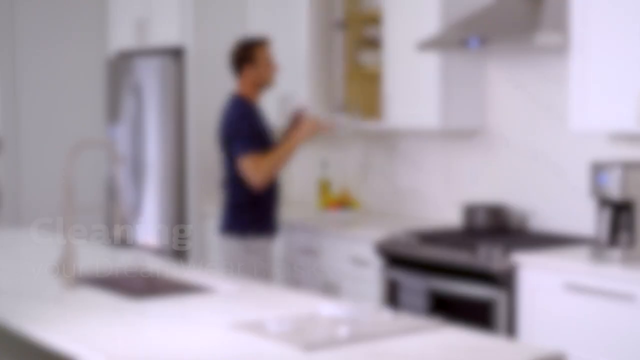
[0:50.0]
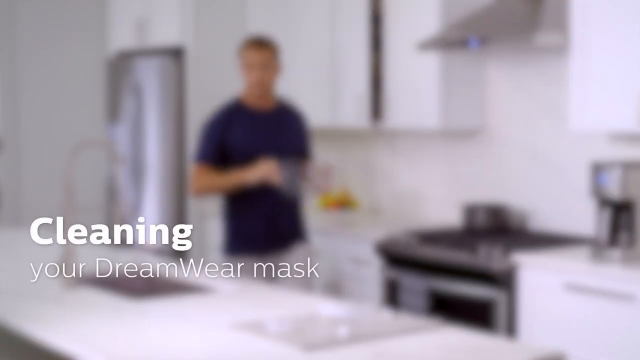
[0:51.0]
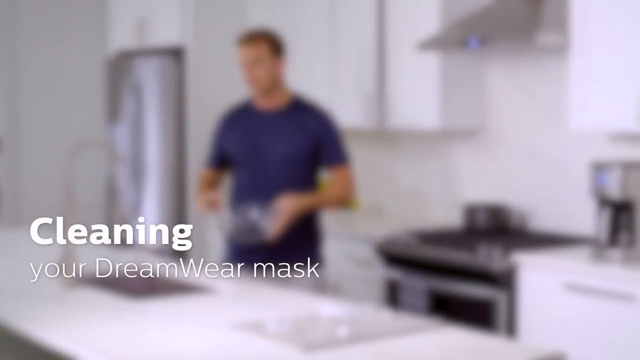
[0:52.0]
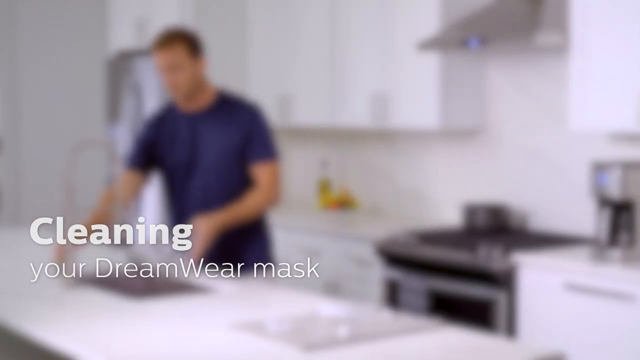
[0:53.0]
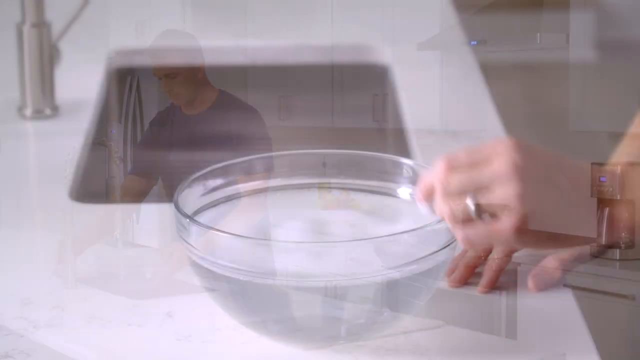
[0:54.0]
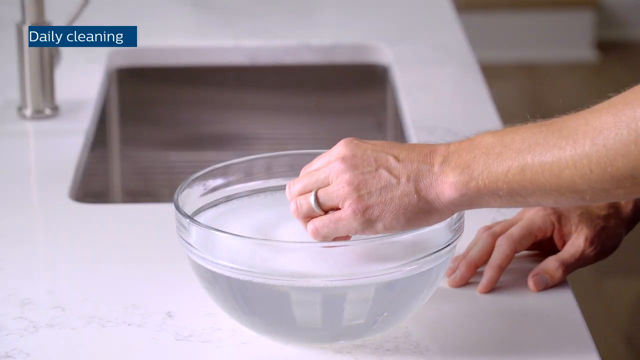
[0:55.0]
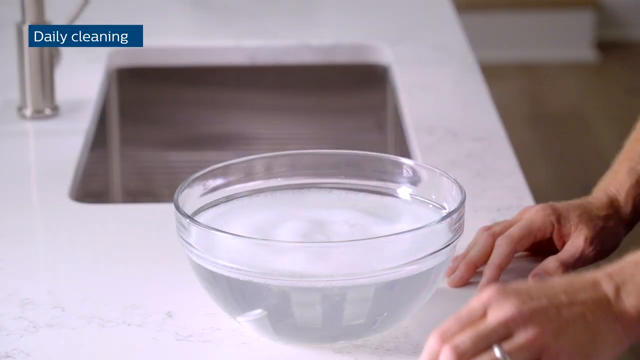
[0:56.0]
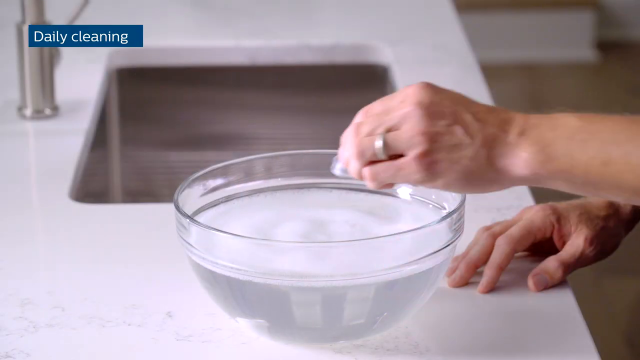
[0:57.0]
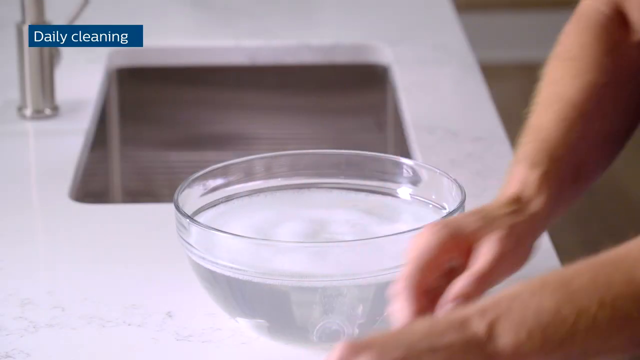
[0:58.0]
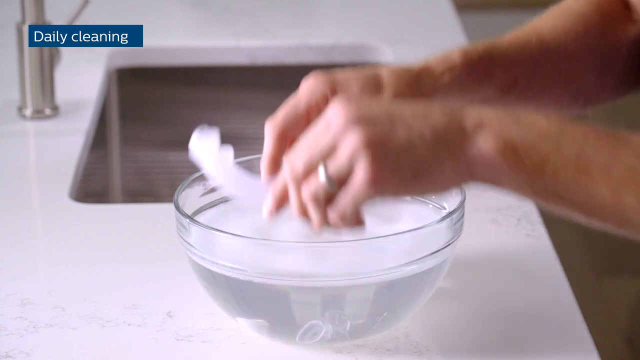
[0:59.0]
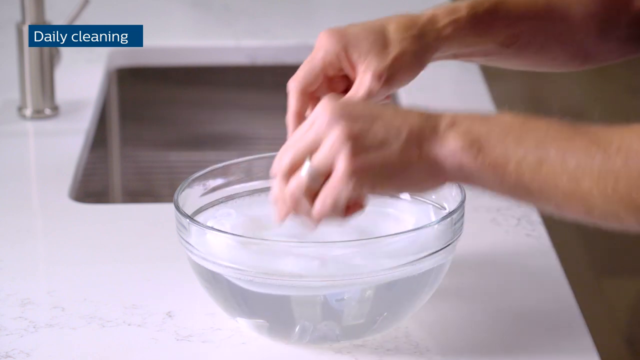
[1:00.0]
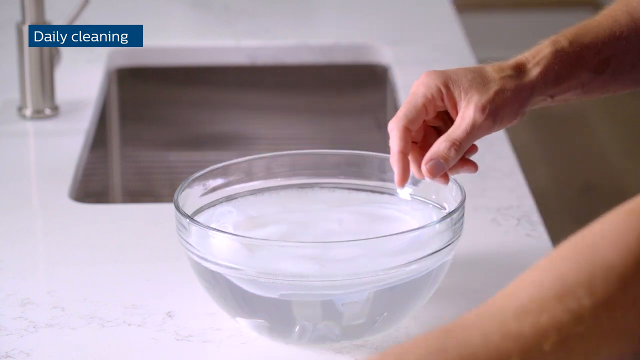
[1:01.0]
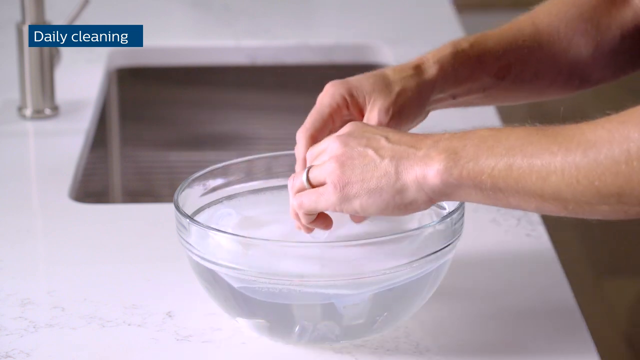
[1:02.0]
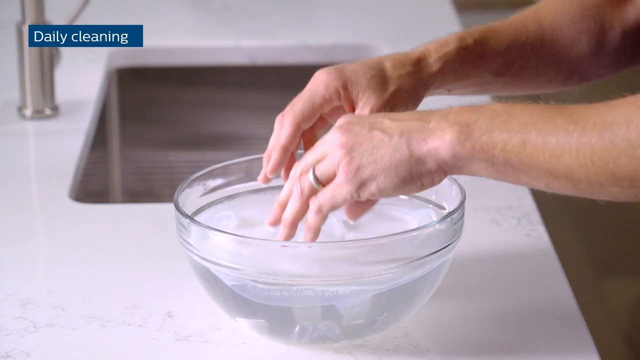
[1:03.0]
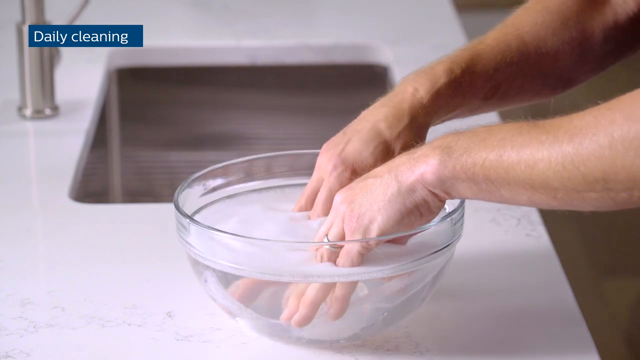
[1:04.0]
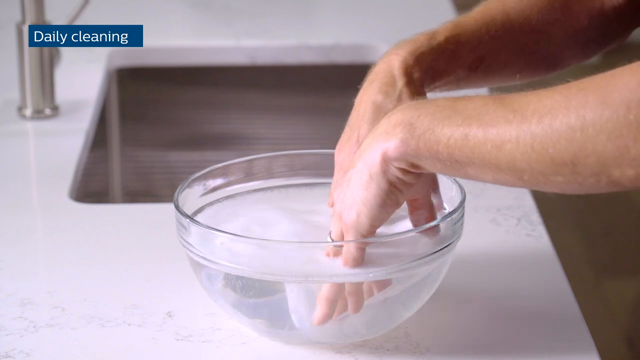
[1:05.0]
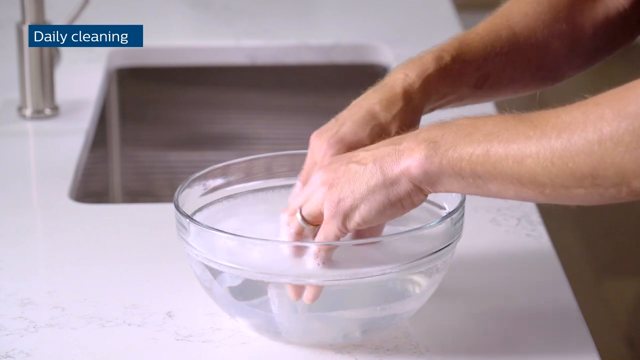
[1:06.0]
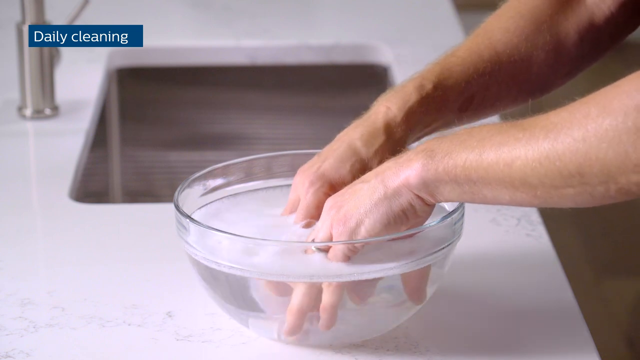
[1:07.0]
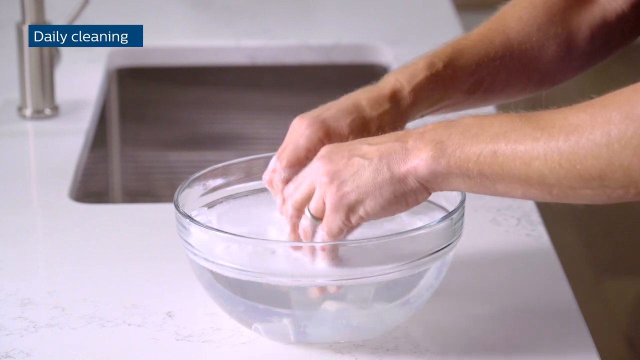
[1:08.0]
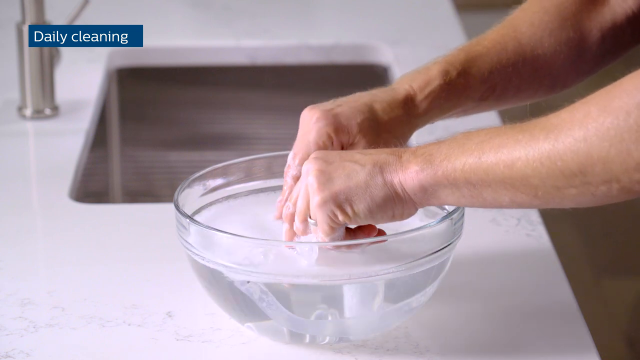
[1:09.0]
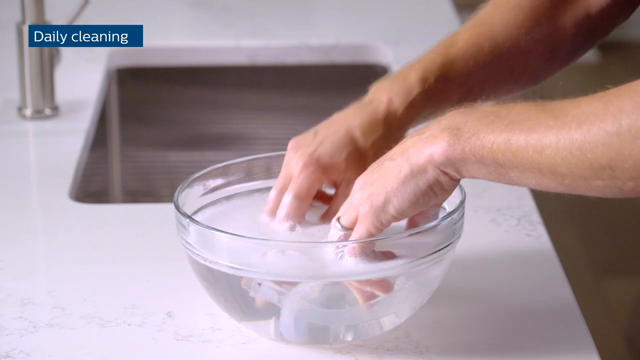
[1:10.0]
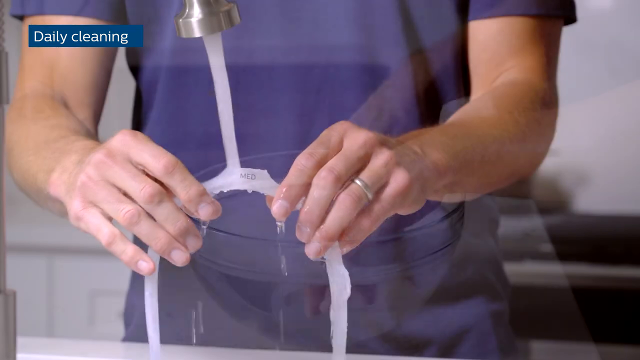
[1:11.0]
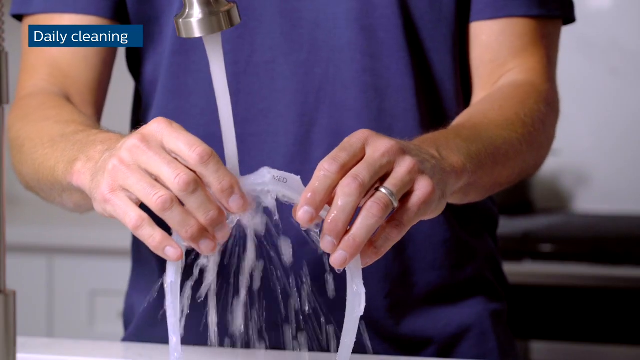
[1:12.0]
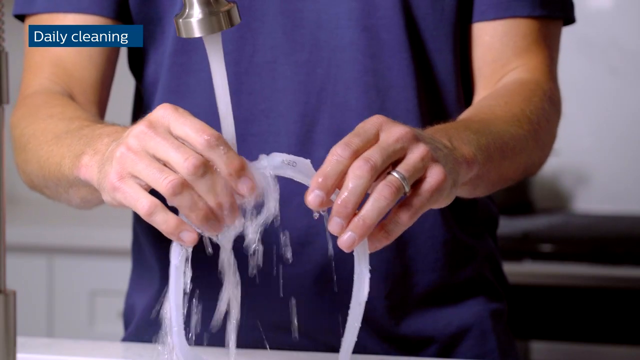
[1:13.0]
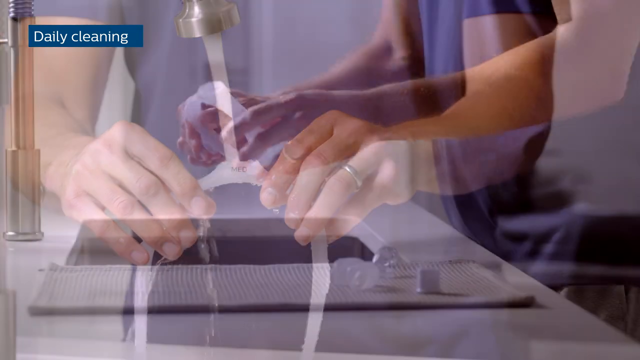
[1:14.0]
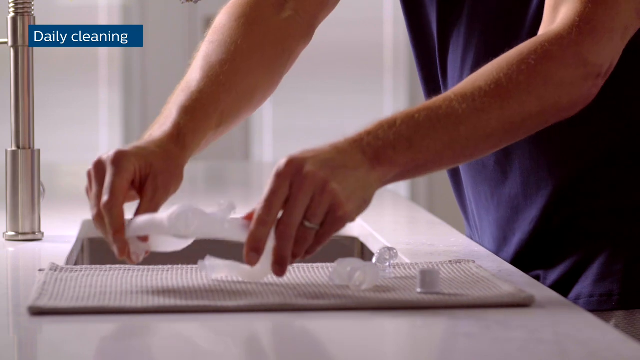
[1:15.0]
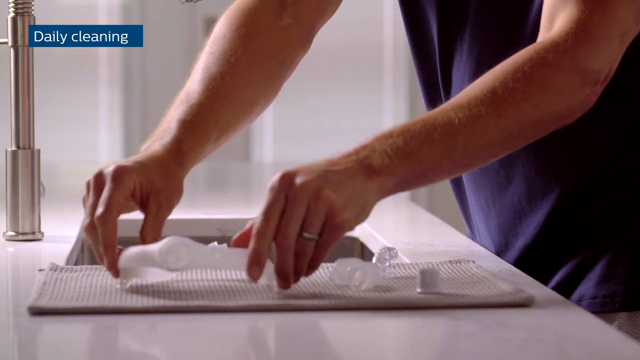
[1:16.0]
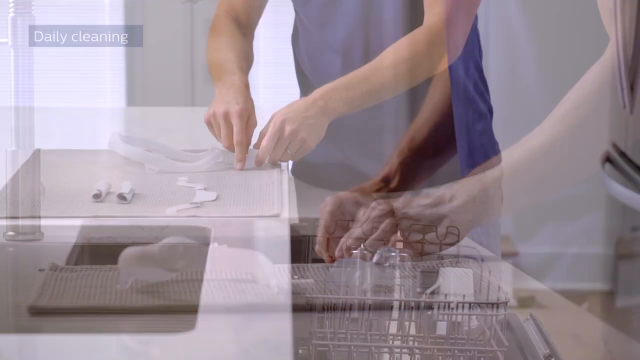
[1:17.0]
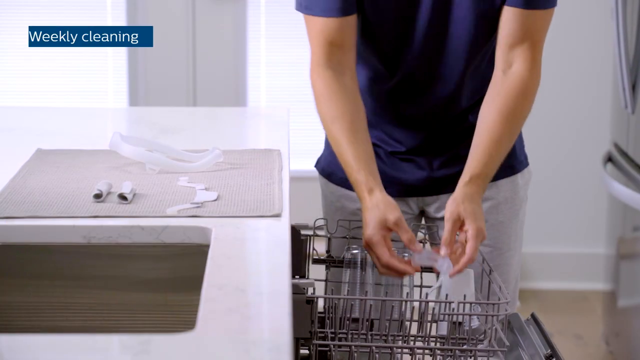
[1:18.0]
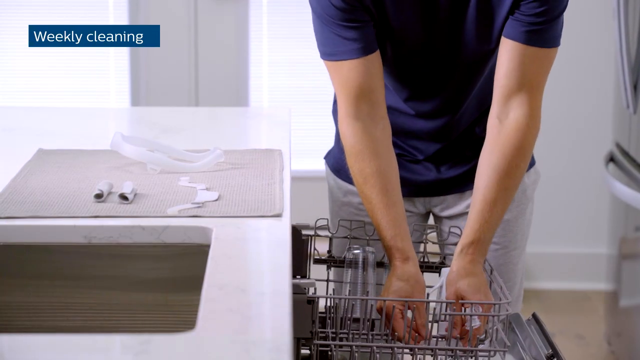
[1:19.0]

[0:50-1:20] The same man puts what looks to be ice cubes into a bowl of water; there is possibly ice involved as well. He puts certain parts of the mask into the bowl and kind of presses them down, not mixing much, just lightly squeezing to rinse them out. He then holds the connected part under the faucet with water running over it. Afterwards he appears to put each separate part he cleaned into the top part of the dishwasher, which already looks pretty full.